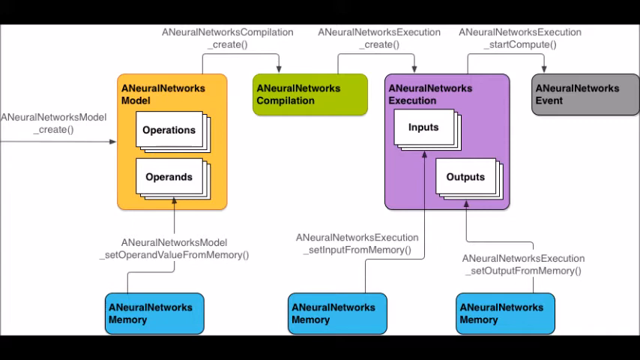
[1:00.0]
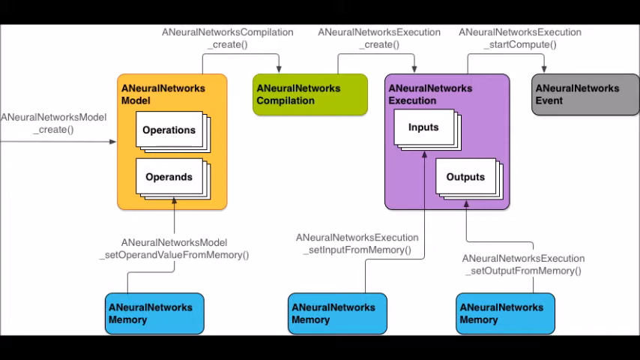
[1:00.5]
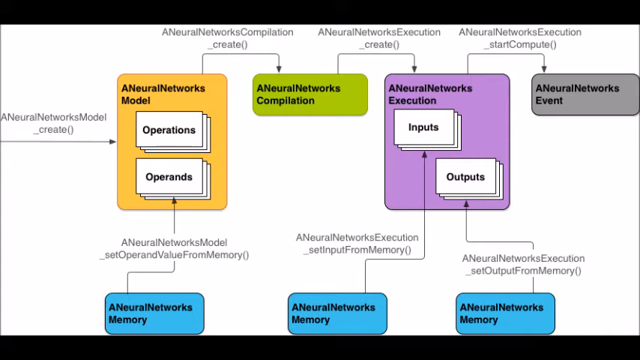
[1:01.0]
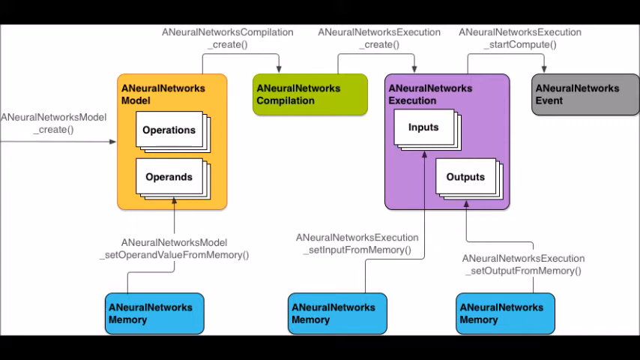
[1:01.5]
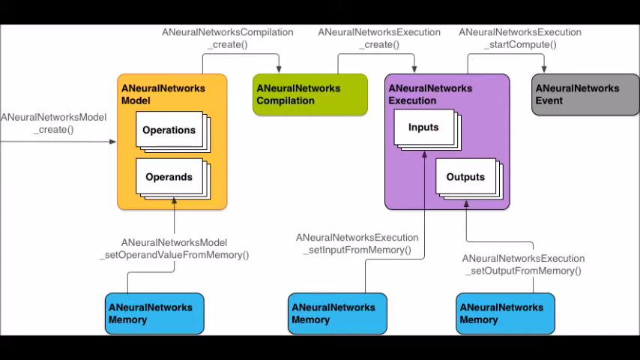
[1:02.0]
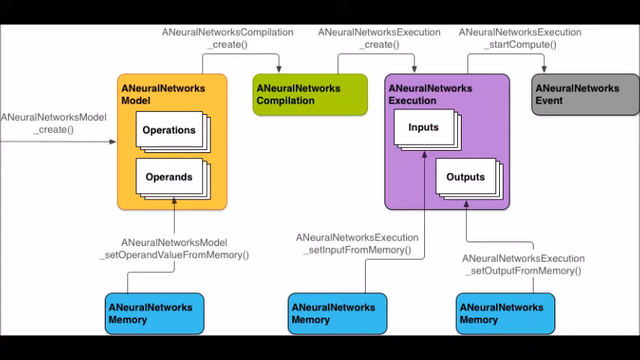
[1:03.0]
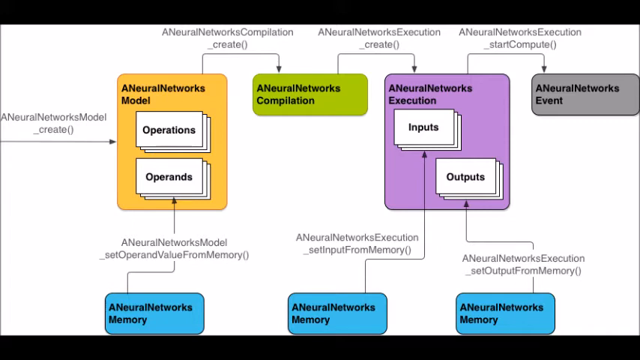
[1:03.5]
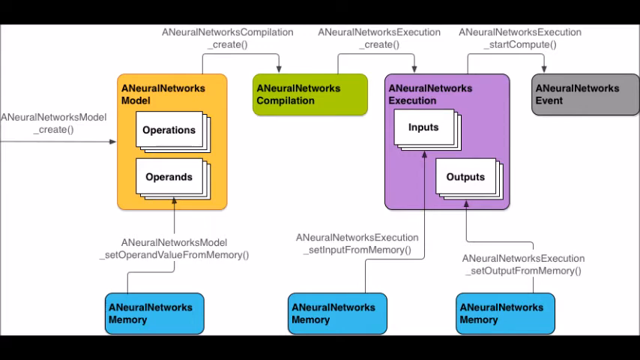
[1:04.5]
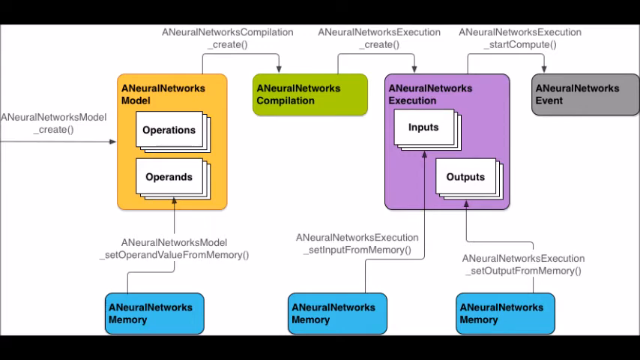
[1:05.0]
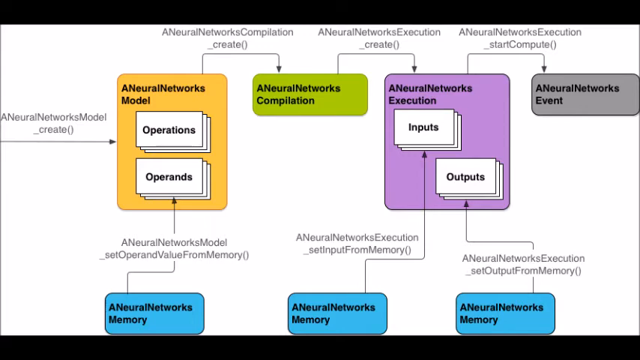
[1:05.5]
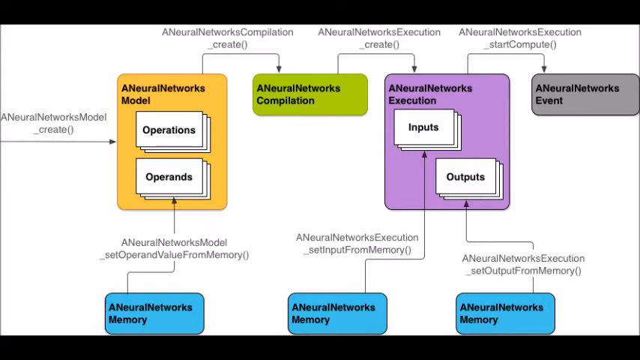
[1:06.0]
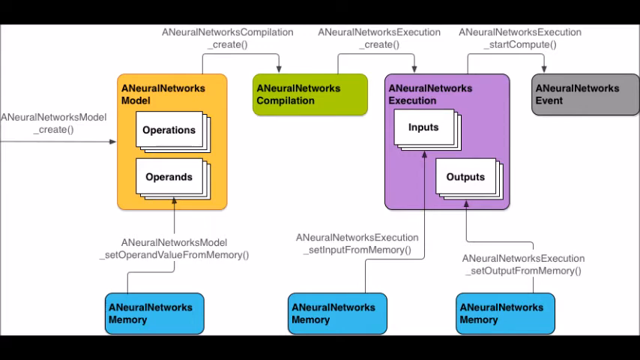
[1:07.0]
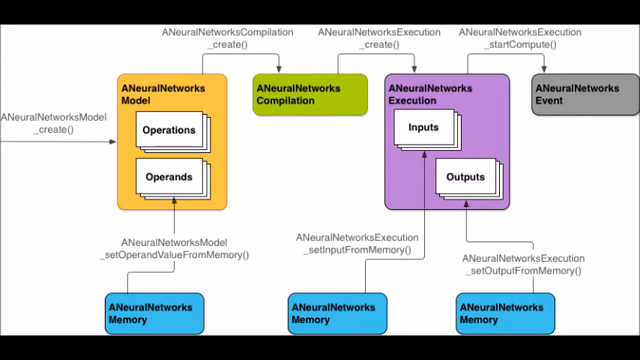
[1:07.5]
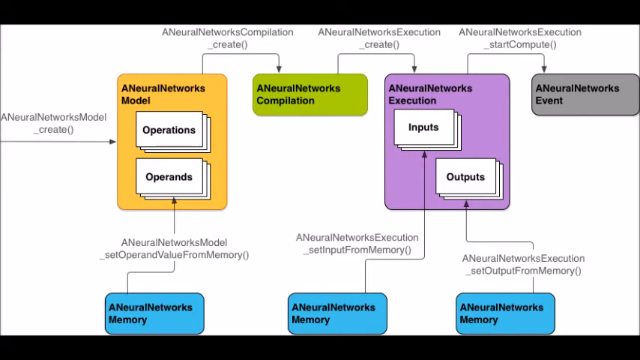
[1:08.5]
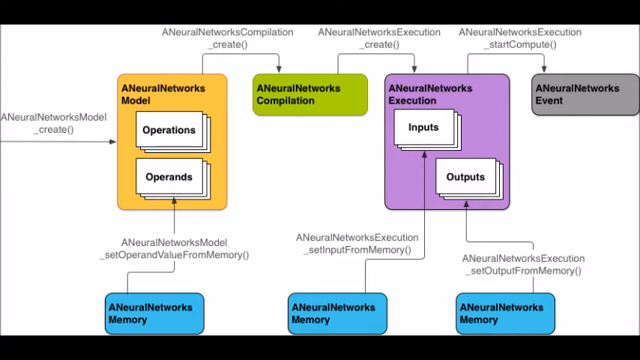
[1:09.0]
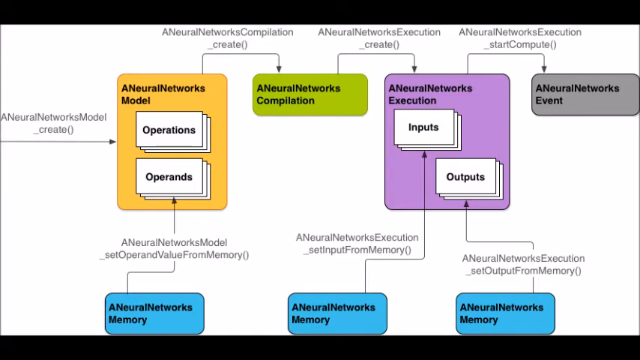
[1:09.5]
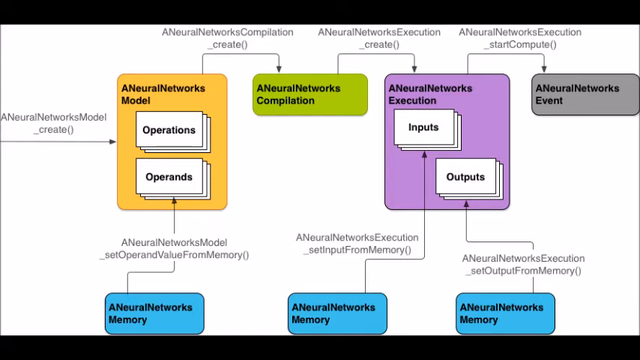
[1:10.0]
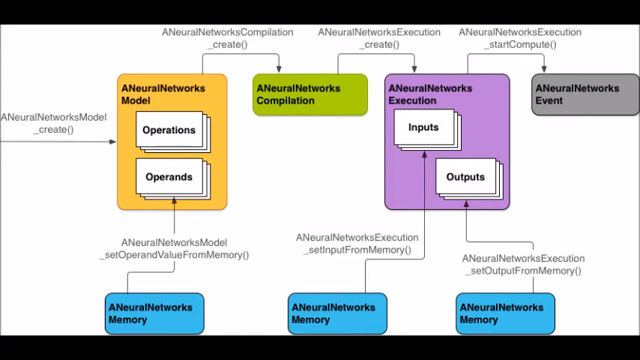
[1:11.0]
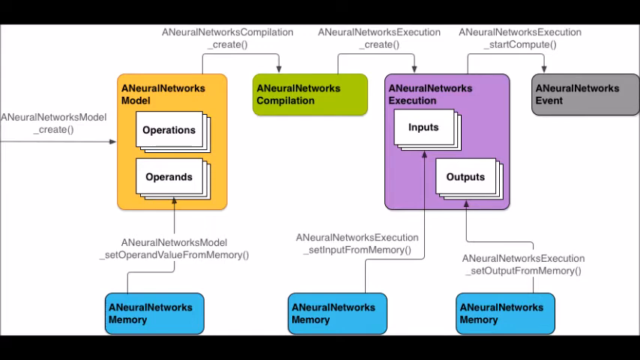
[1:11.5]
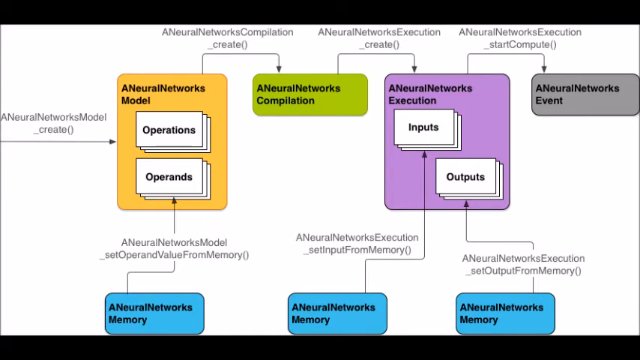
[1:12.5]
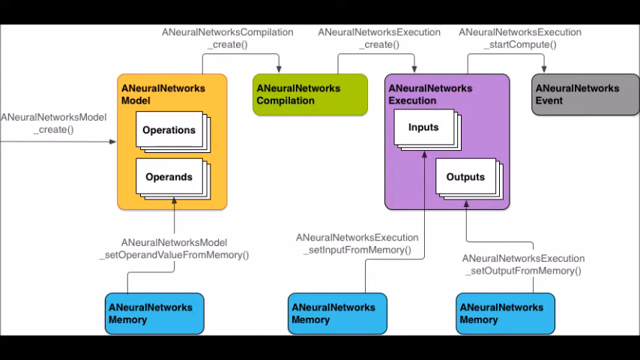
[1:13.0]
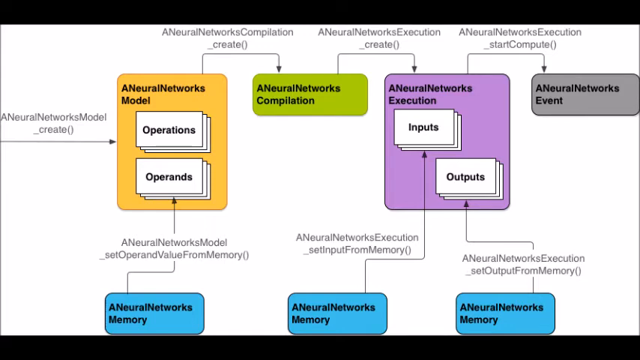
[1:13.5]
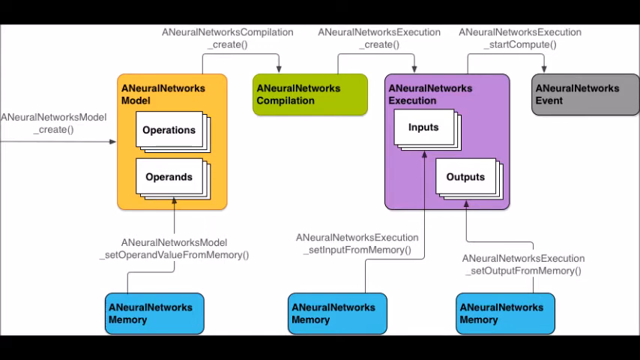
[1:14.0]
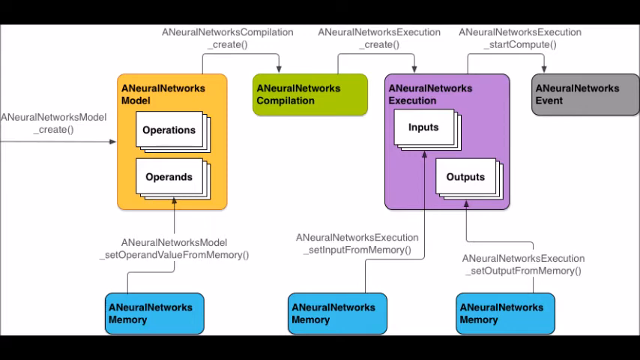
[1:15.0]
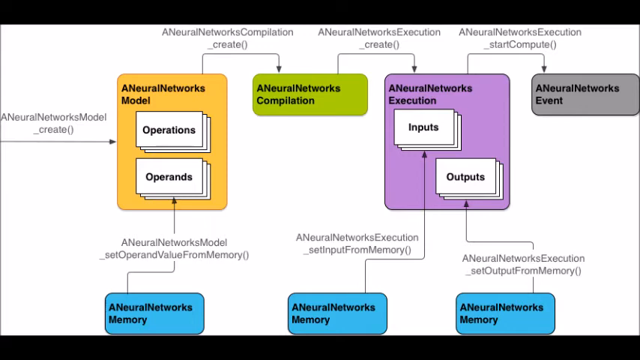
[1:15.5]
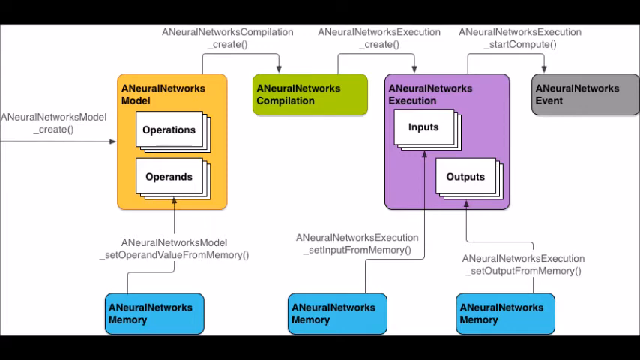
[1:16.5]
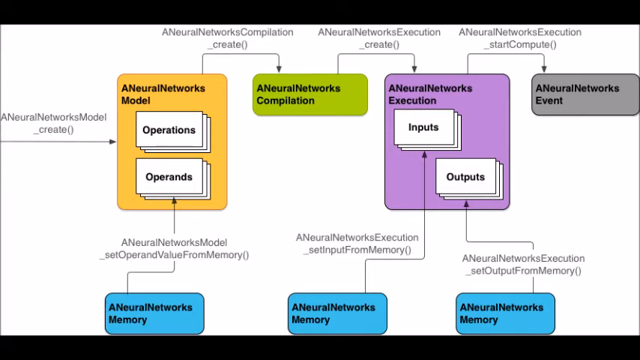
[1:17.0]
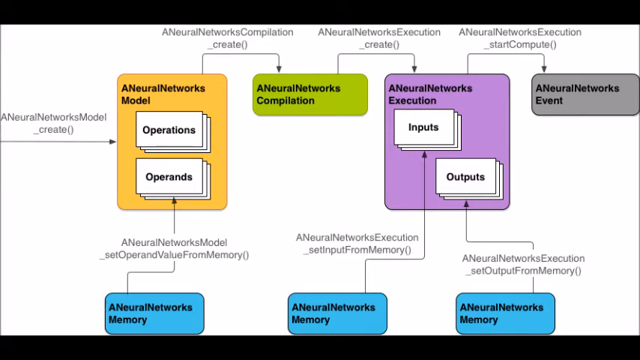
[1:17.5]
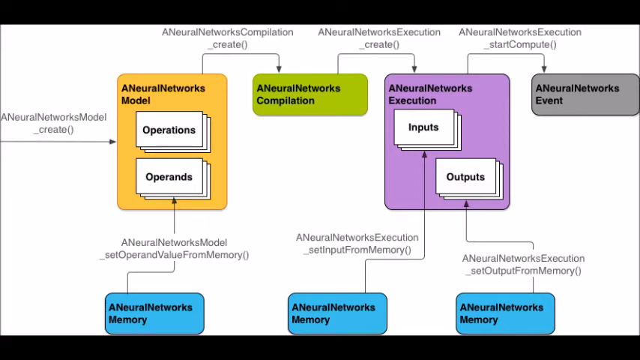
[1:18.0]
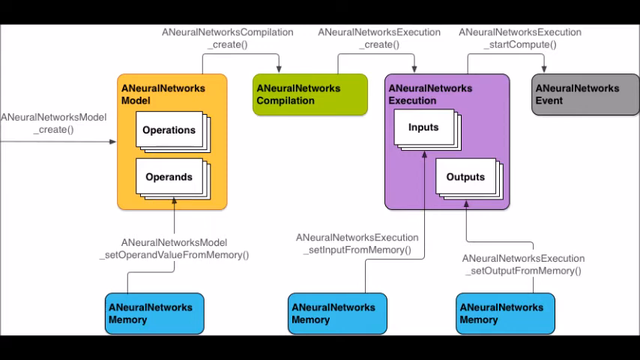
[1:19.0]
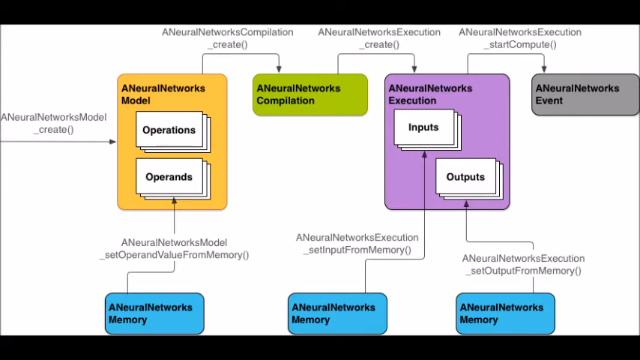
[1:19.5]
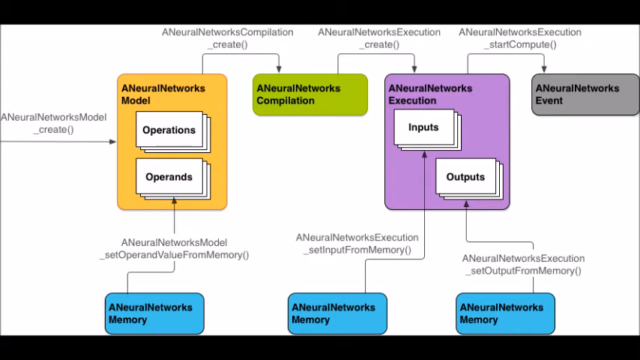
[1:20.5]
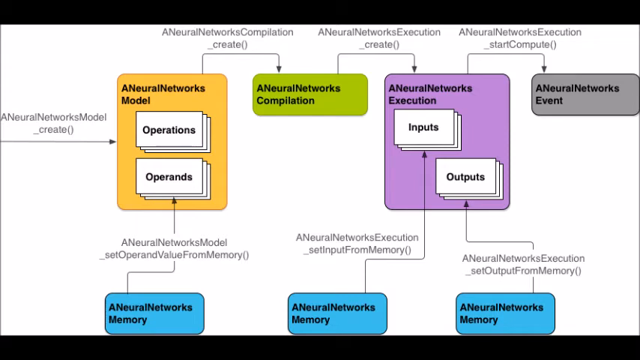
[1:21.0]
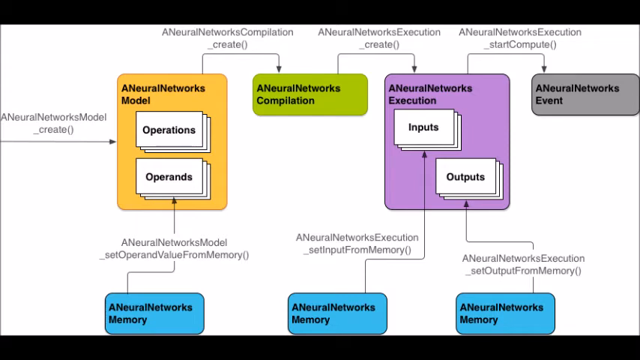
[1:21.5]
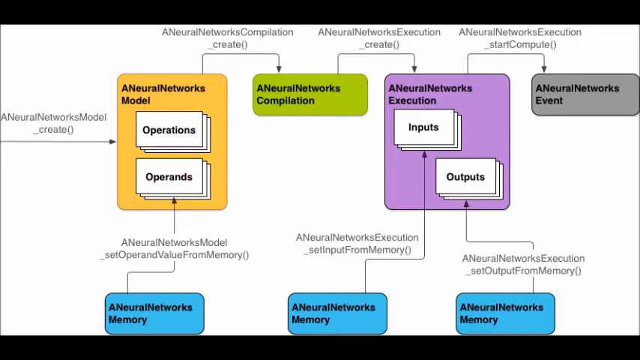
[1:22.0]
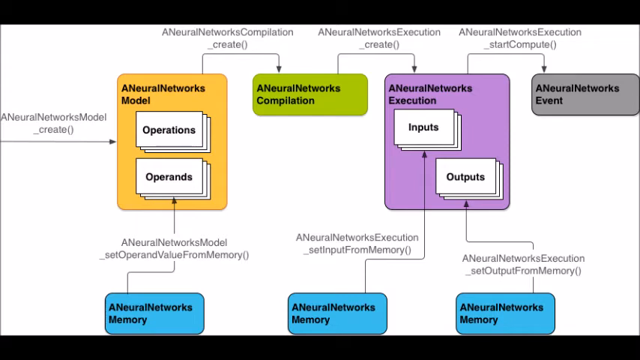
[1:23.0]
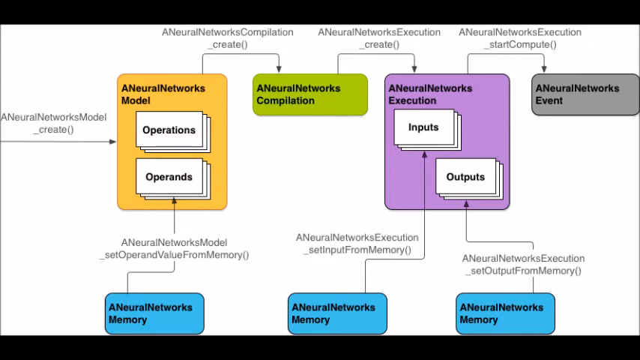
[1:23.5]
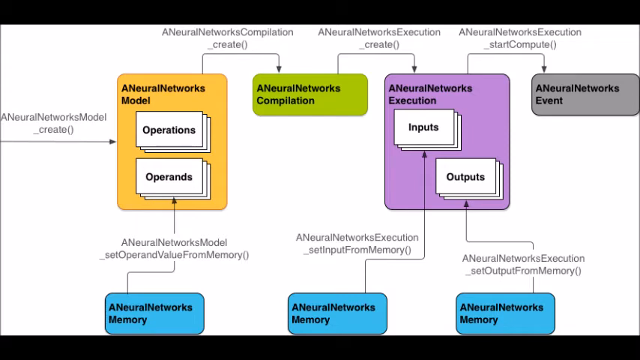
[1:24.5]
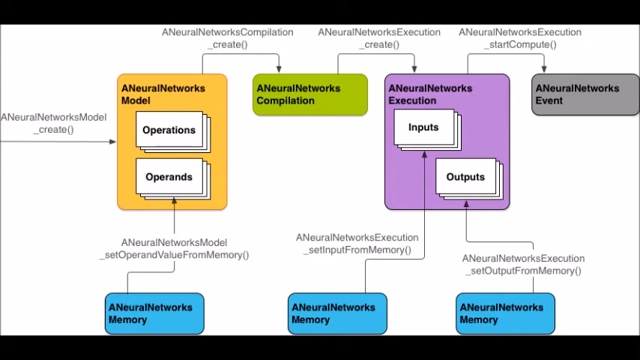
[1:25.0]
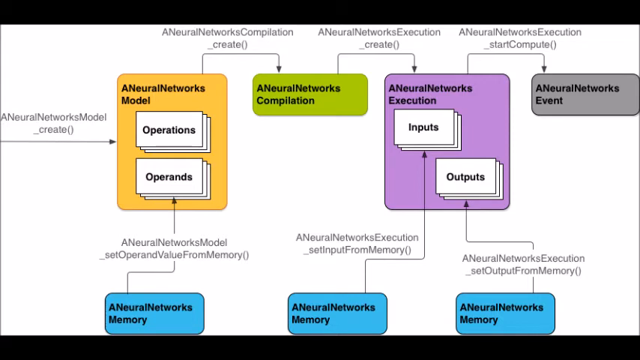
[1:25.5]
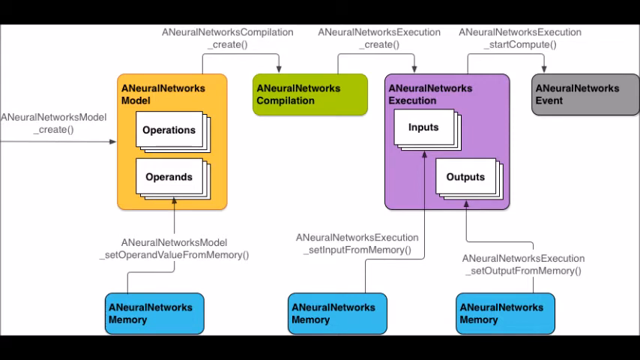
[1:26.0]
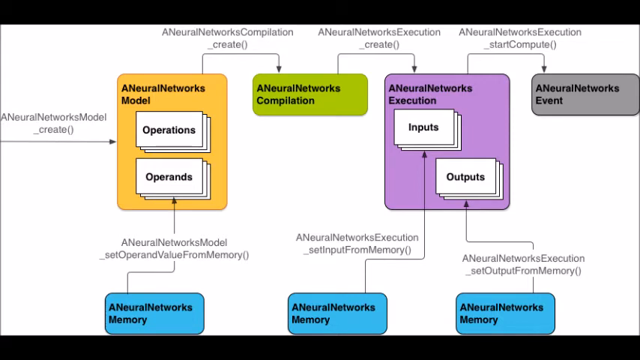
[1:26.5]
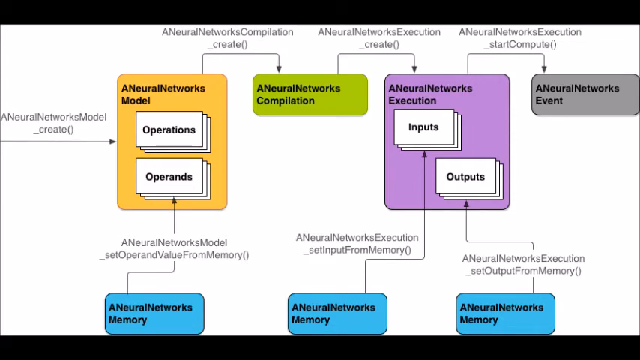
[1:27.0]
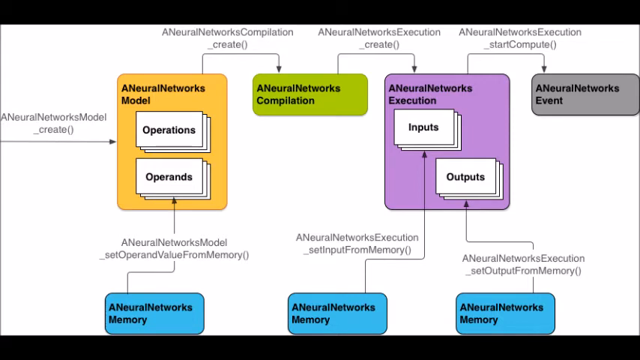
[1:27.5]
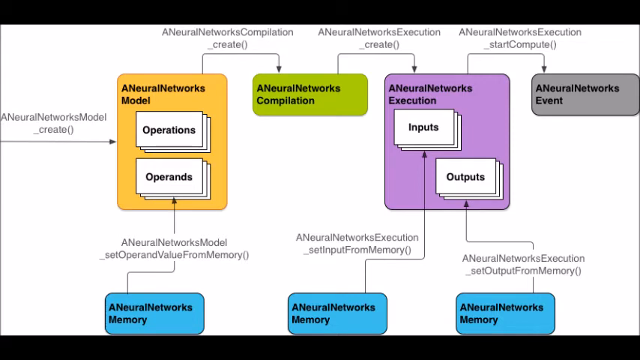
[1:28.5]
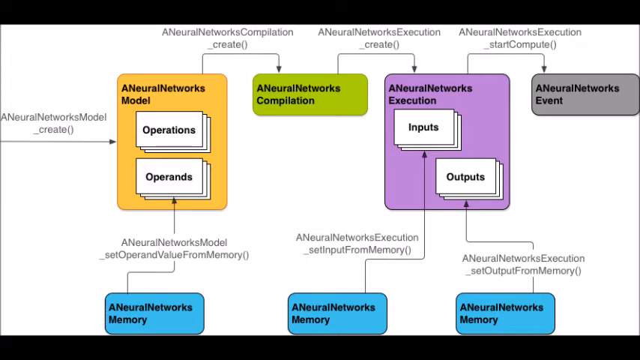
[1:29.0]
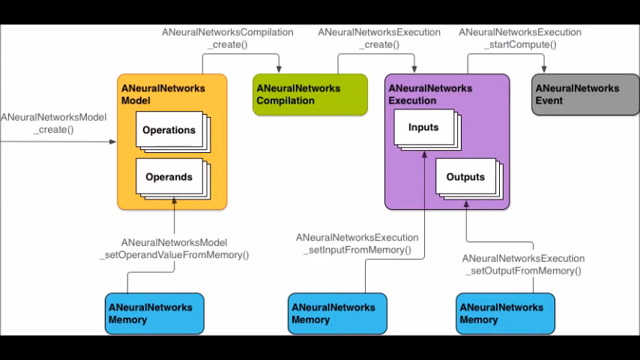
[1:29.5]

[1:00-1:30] The other graph shows items such as "A-Neural Networks model", "A-Neural Networks compilation" and "A-Neural Networks execution". The model part starts with something called "A-Neural Networks model create", apparently code since it has parentheses right after it. It points to the right to an orange section that looks like it has operations and commands. Further right are more branches: "A-Neural Networks compilation create" leads to a green sort of banner that says "A-Neural Networks compilation". Further right it says "A-Neural Networks execution create", and there is a purple section that says "A-Neural Networks execution".